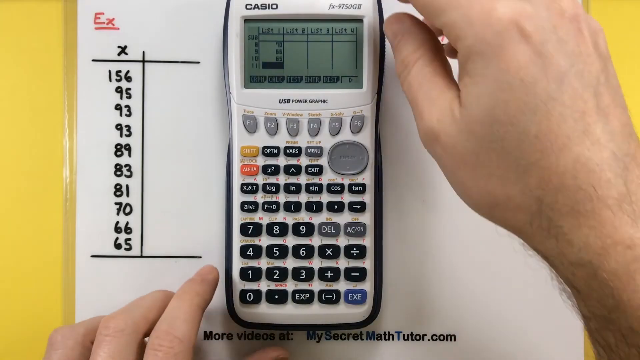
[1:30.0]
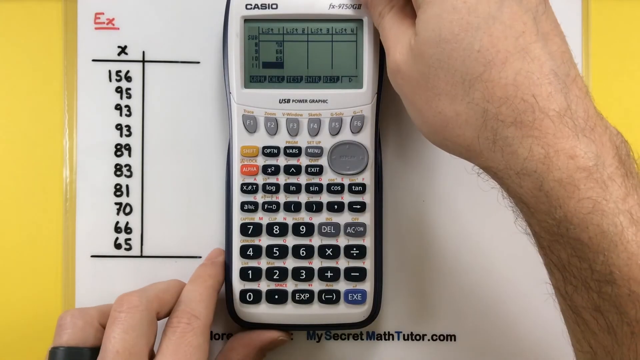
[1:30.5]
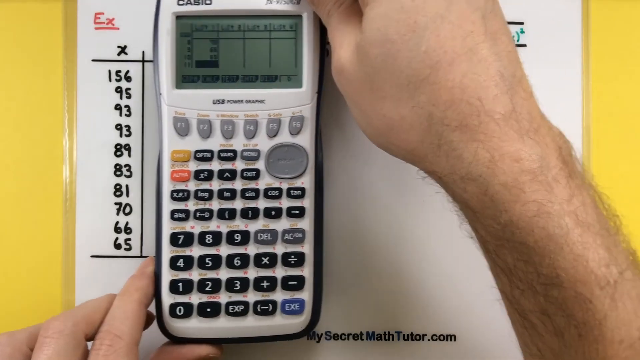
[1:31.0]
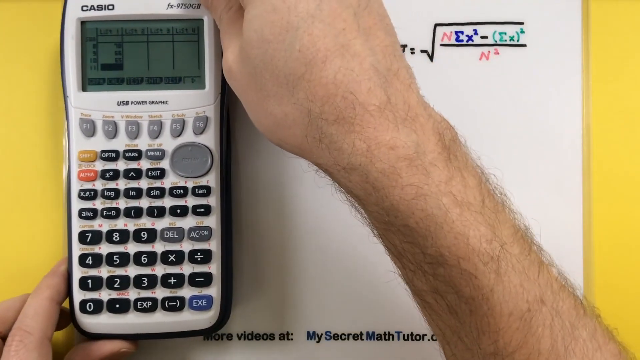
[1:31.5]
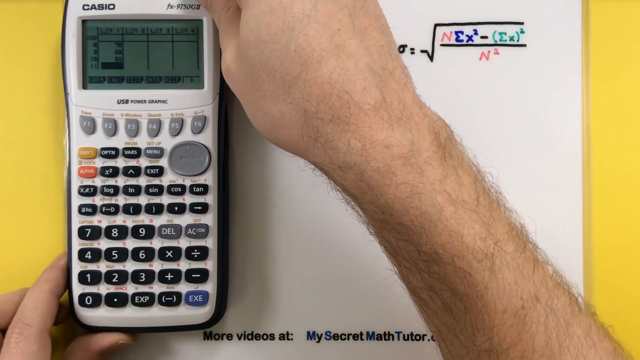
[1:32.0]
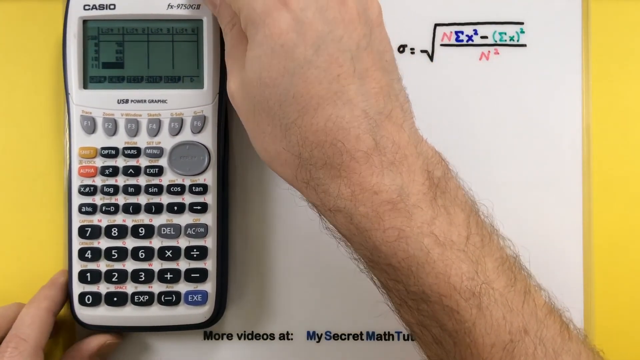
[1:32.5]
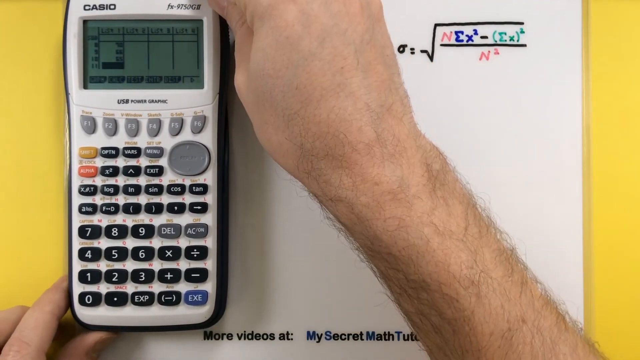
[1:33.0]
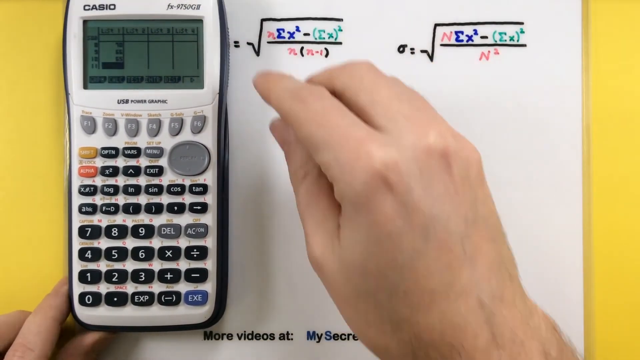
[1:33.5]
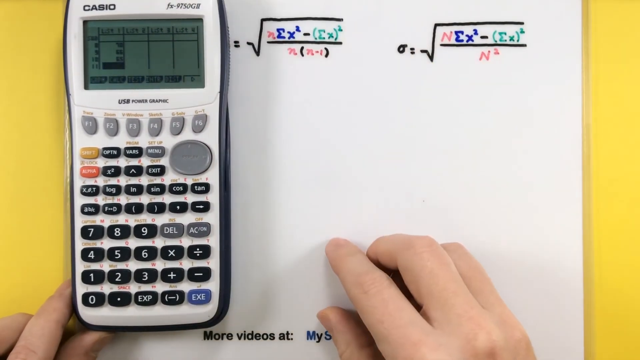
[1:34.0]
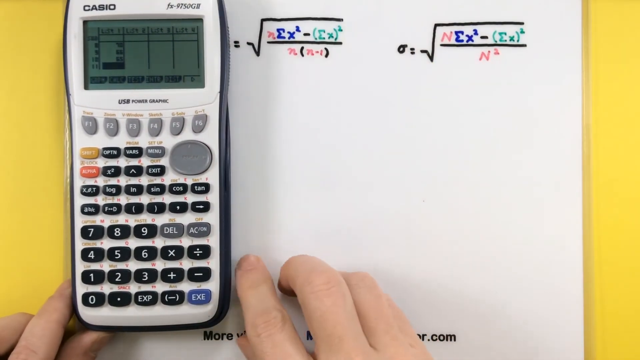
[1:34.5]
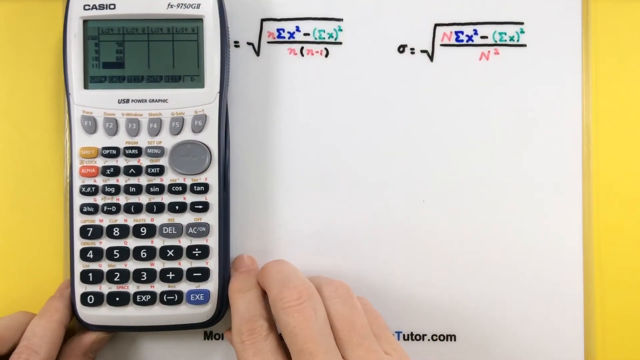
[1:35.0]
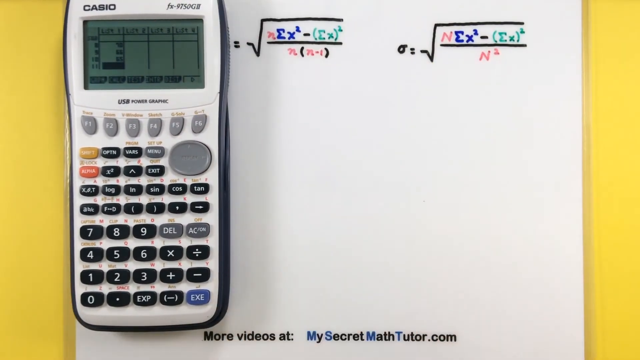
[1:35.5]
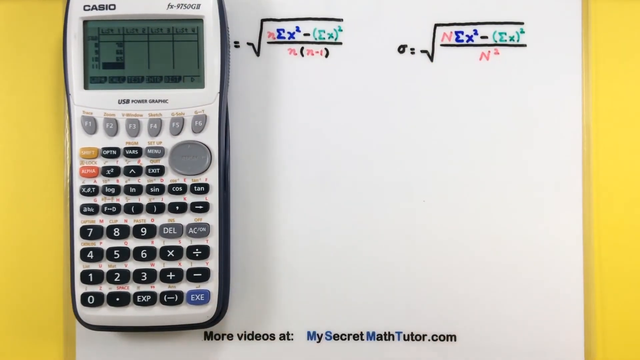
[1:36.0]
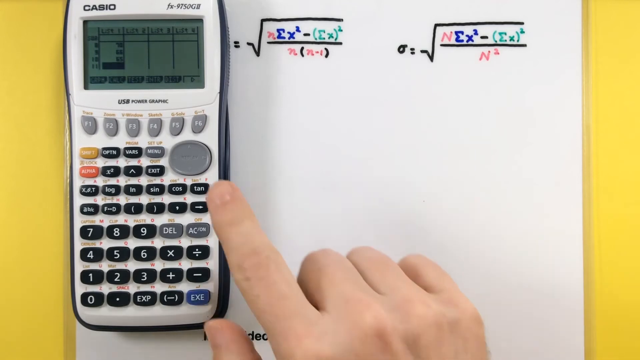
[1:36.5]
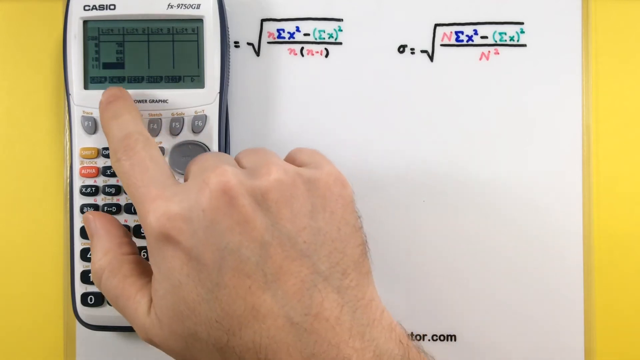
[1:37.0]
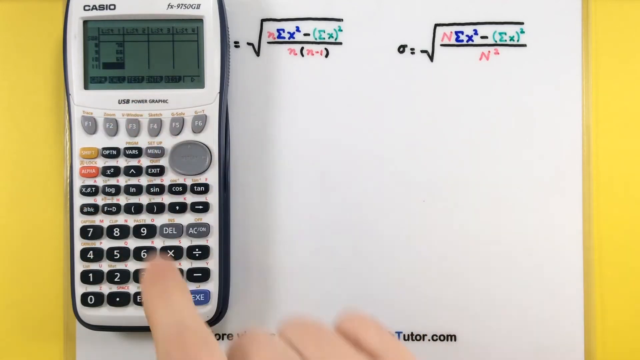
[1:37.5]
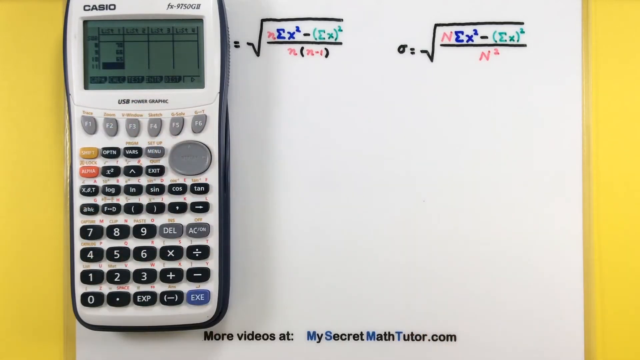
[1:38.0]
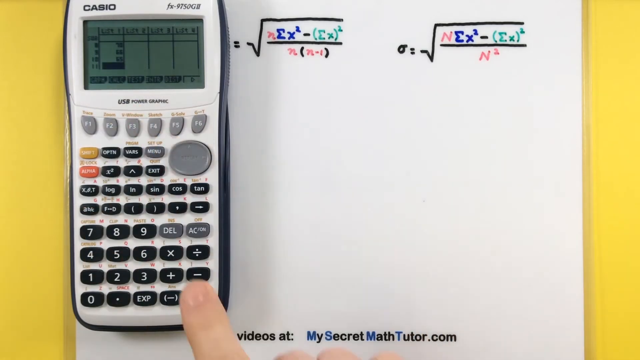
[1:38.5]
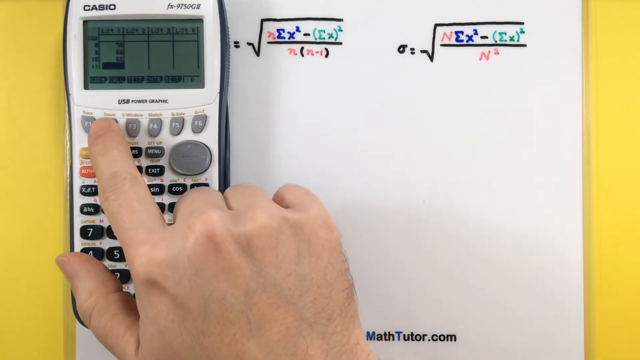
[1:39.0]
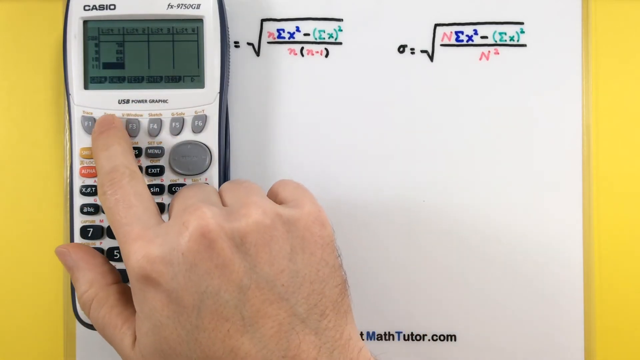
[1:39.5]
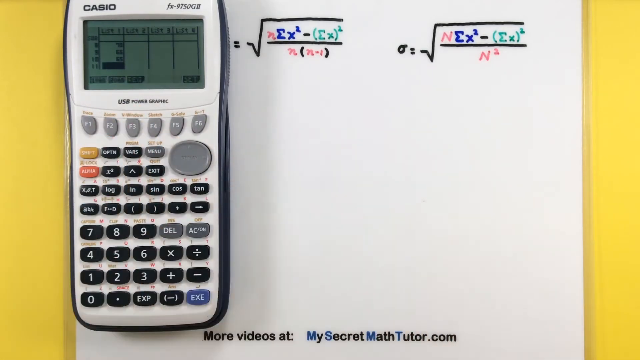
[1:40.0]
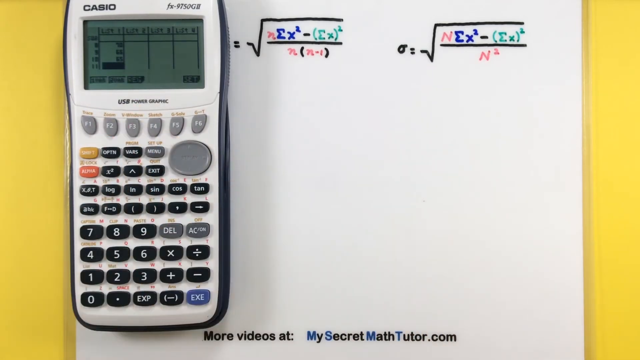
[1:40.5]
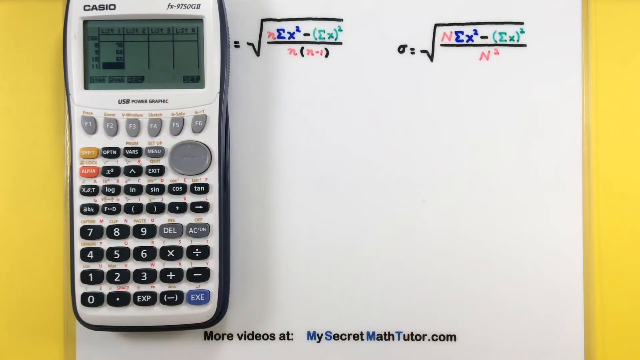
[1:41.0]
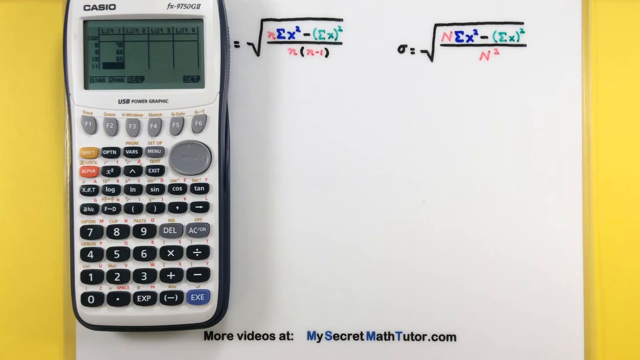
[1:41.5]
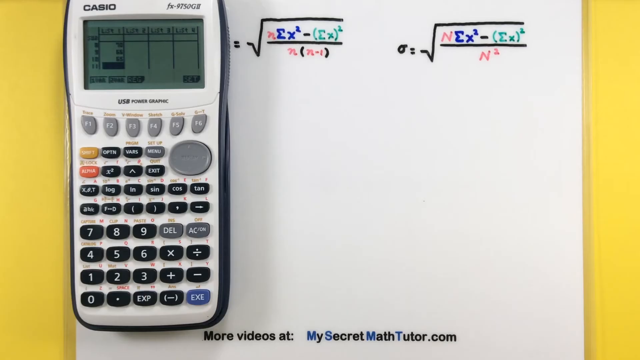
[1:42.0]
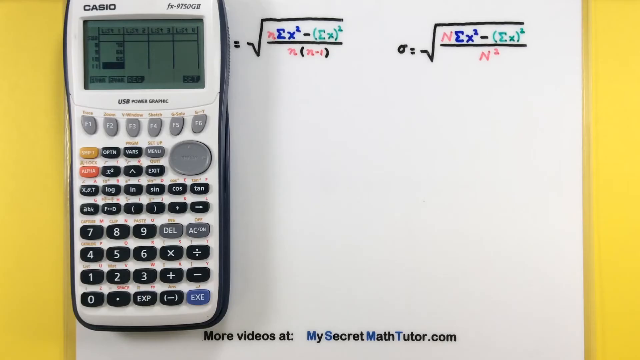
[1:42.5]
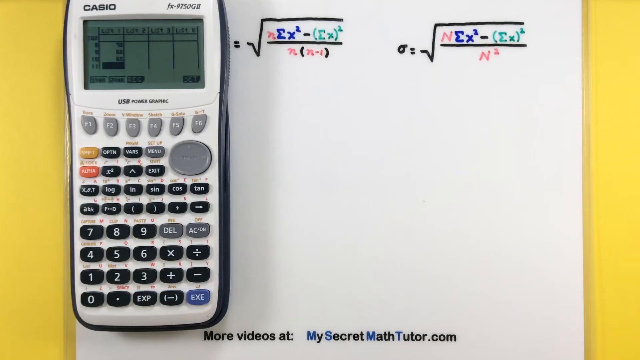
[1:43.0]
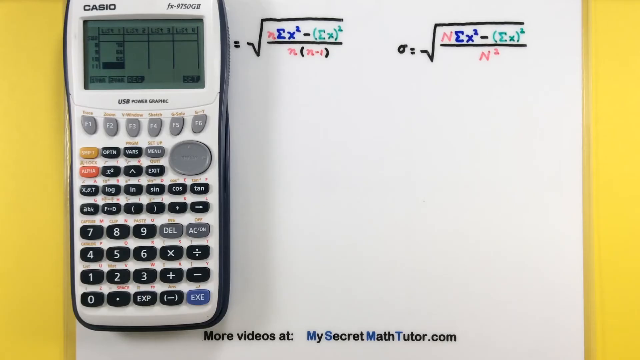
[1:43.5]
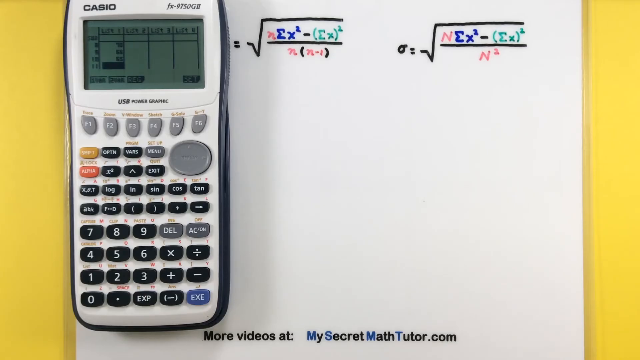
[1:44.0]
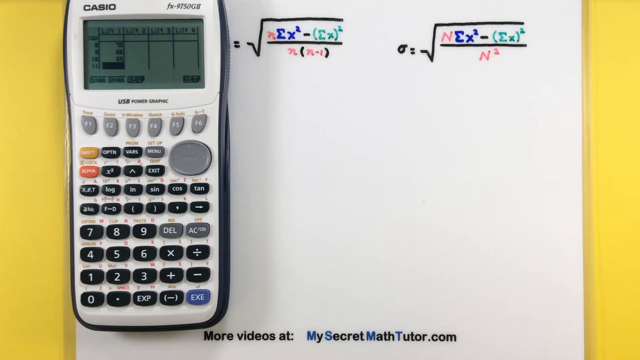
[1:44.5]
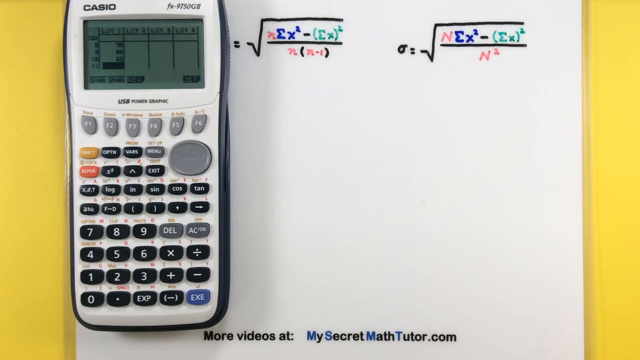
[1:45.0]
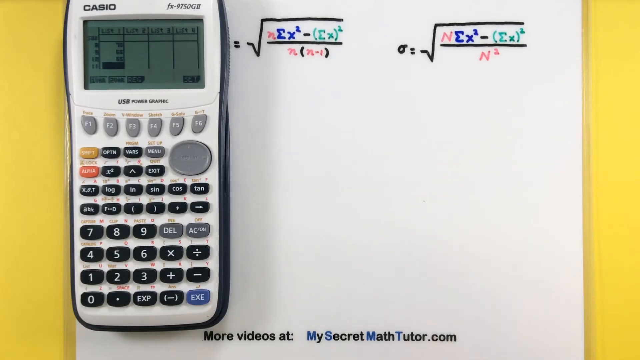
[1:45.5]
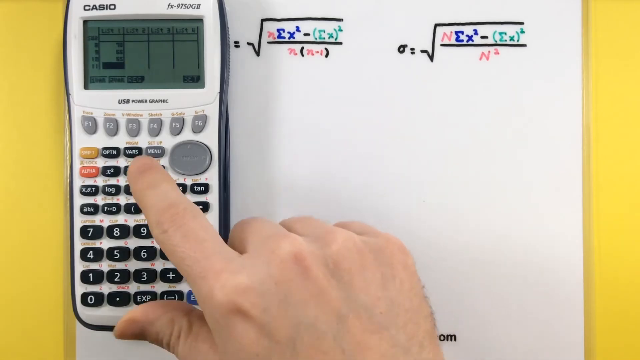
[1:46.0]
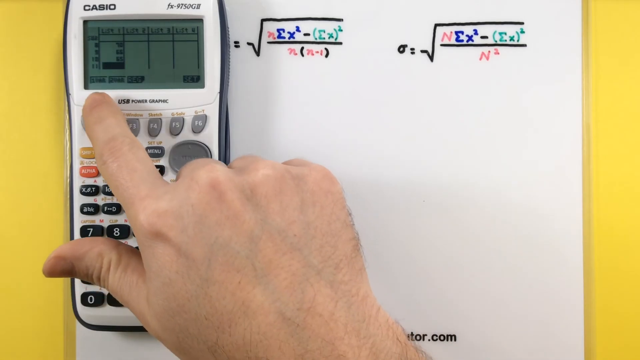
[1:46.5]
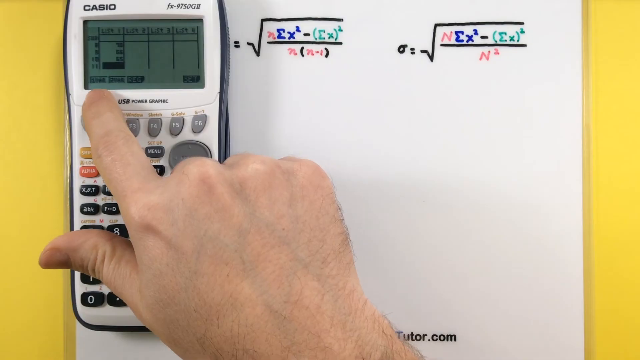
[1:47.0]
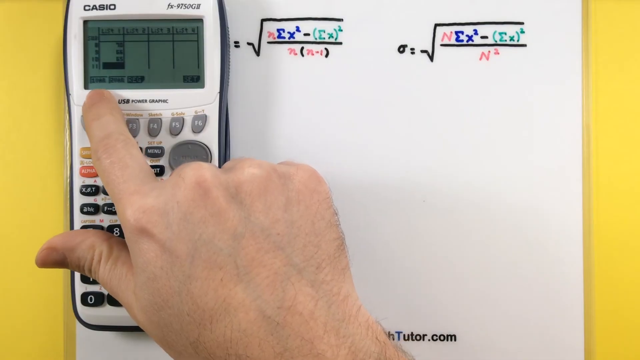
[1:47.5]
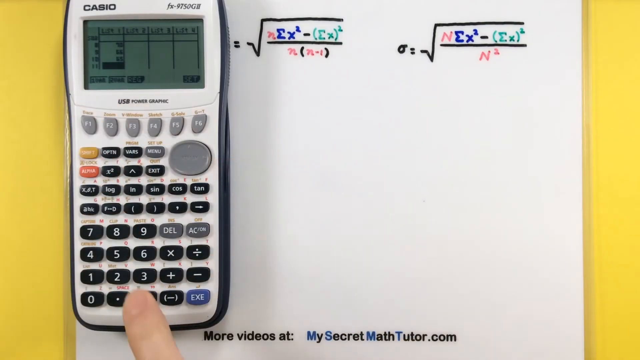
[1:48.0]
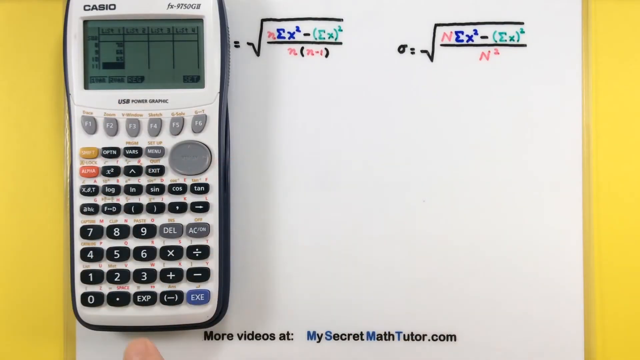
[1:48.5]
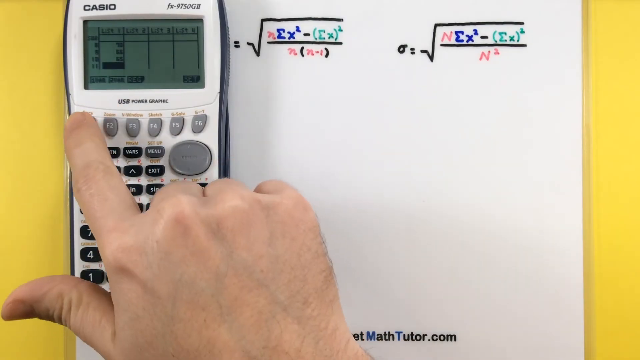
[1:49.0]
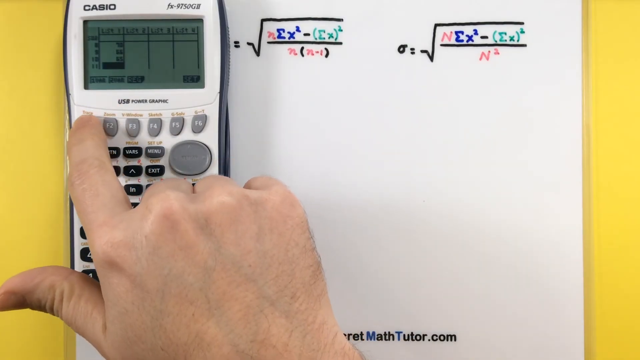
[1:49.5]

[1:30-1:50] A calculator sits upon a laminated white piece of paper on a yellow desk. The paper has a chart on the left with an X at the top and the numbers 156, 95, 93, 93, 89, 83, 81, 70, 66, and 65 below it; the chart to the right of the X column is empty. To the right of the chart is a calculation. At the bottom of the paper it says "more videos at: MySecretMathTutor.com". The calculator screen shows a chart. The calculator has many keys, a white face and a blue base. The hand moves the calculator to the left side of the page, and the finger then presses another button.